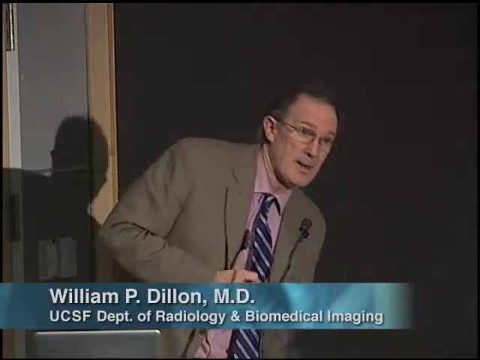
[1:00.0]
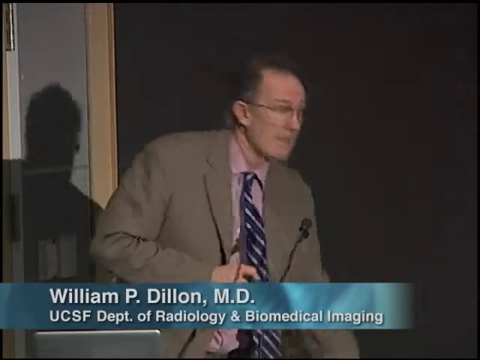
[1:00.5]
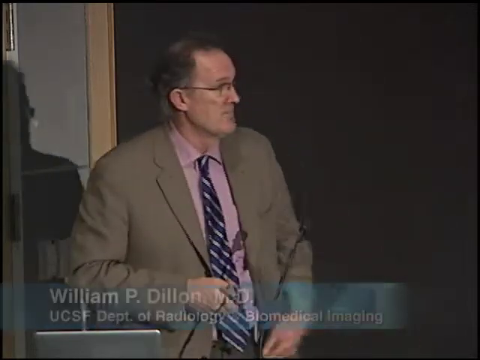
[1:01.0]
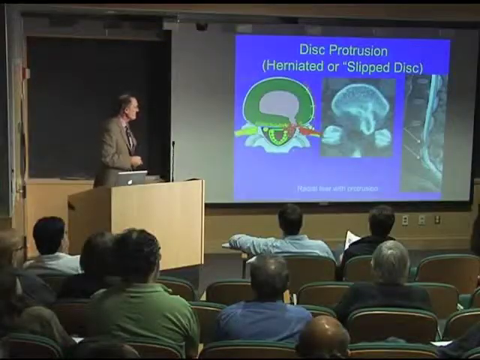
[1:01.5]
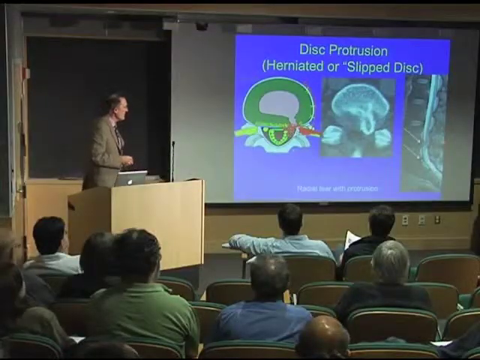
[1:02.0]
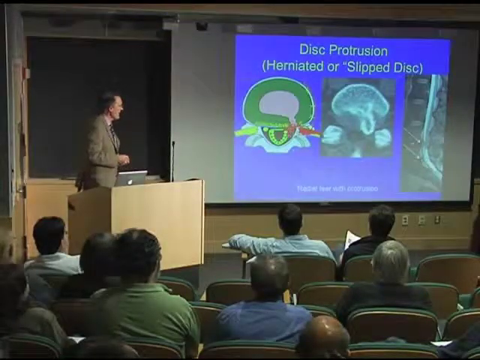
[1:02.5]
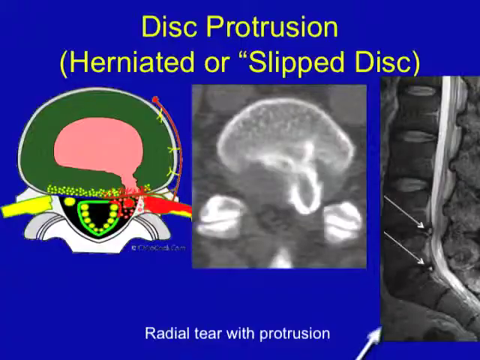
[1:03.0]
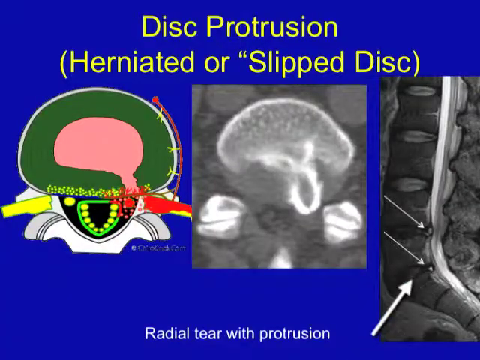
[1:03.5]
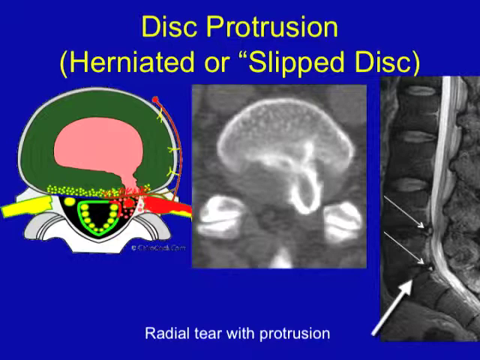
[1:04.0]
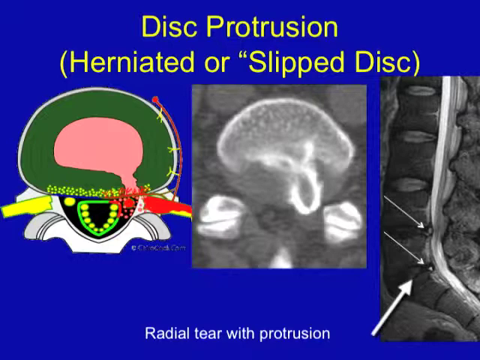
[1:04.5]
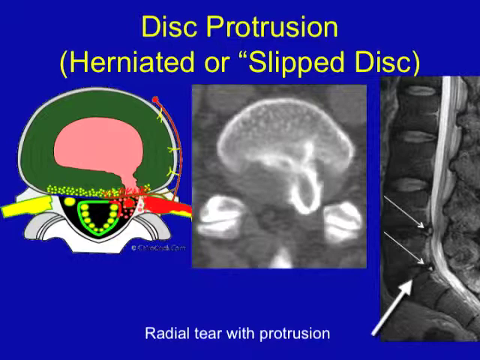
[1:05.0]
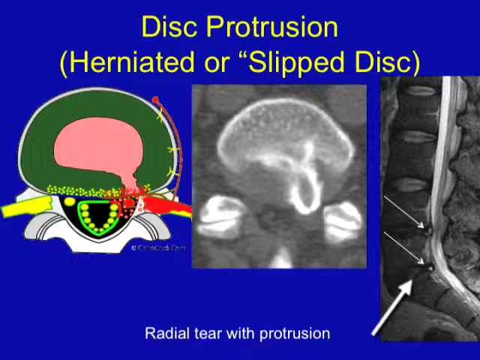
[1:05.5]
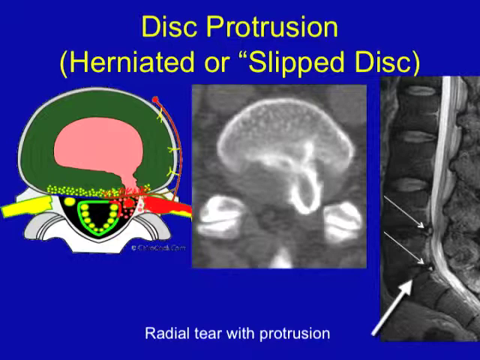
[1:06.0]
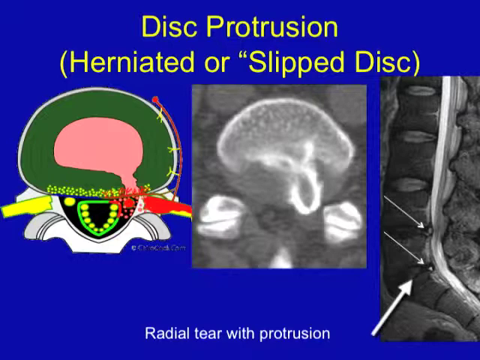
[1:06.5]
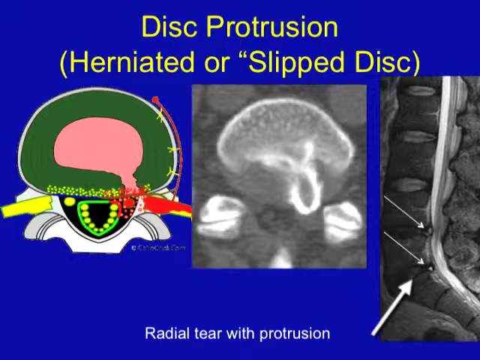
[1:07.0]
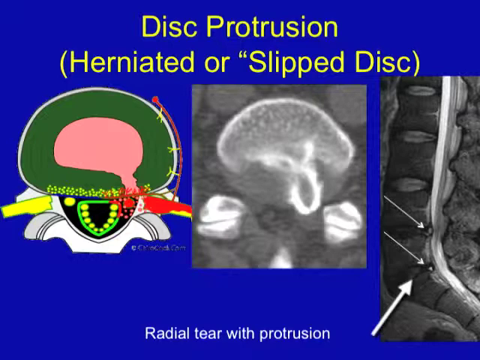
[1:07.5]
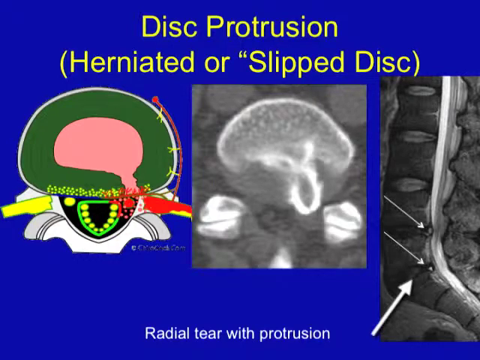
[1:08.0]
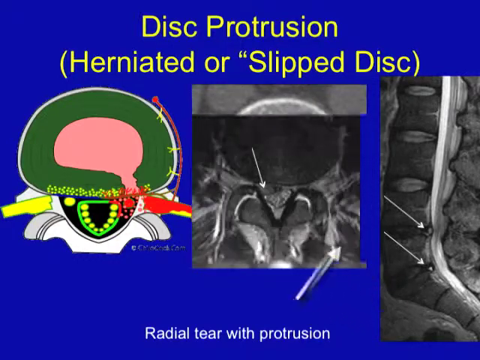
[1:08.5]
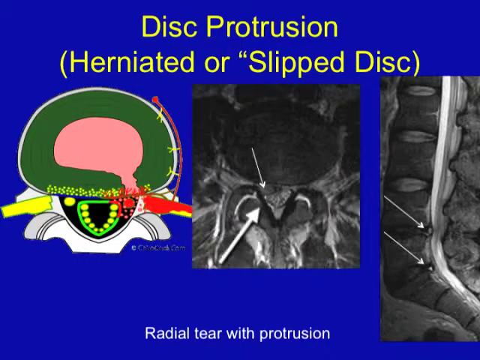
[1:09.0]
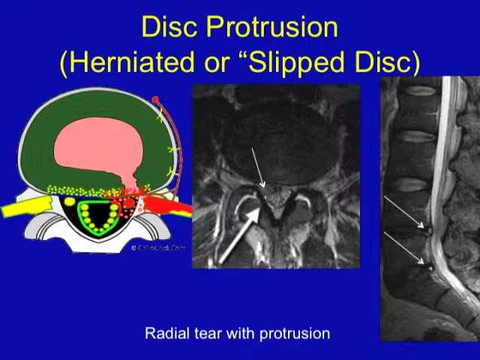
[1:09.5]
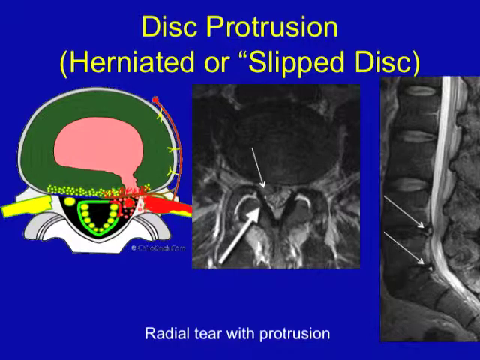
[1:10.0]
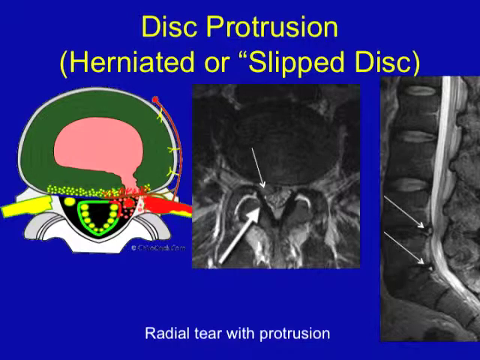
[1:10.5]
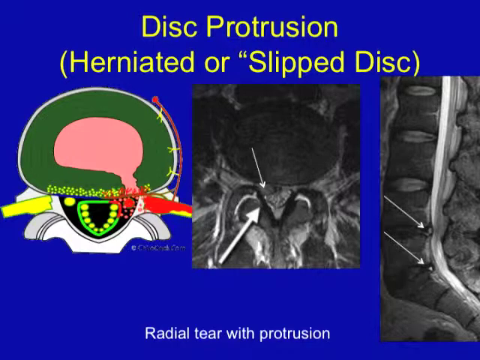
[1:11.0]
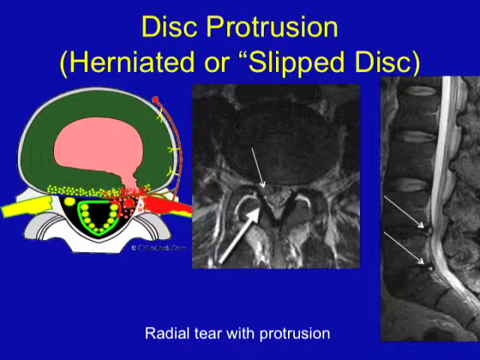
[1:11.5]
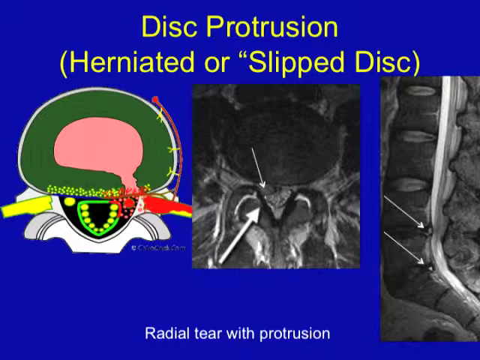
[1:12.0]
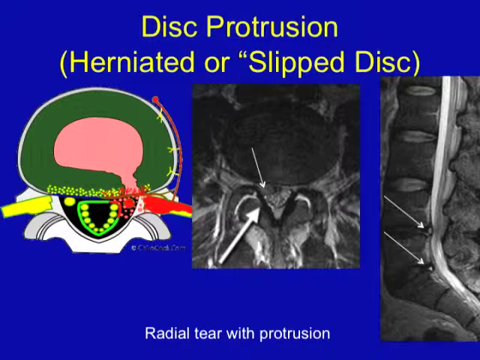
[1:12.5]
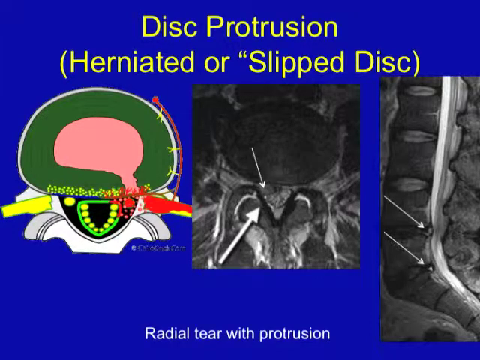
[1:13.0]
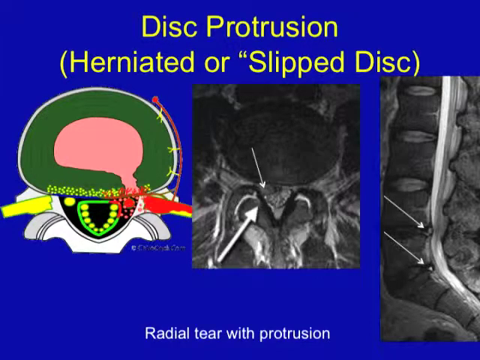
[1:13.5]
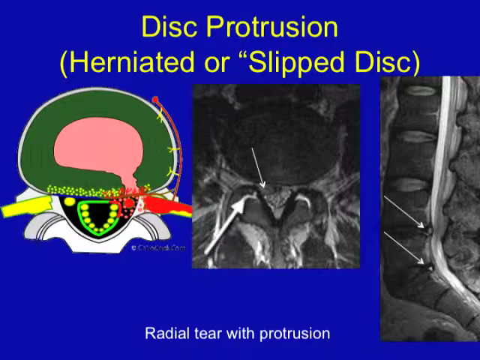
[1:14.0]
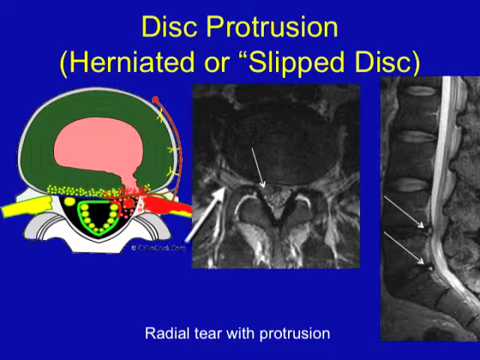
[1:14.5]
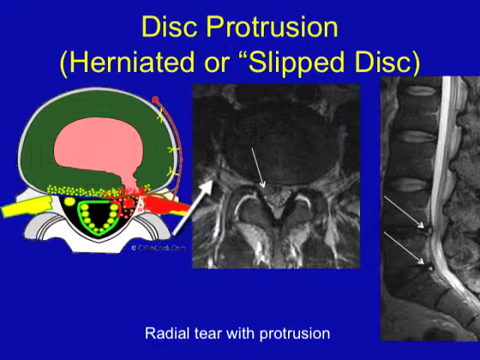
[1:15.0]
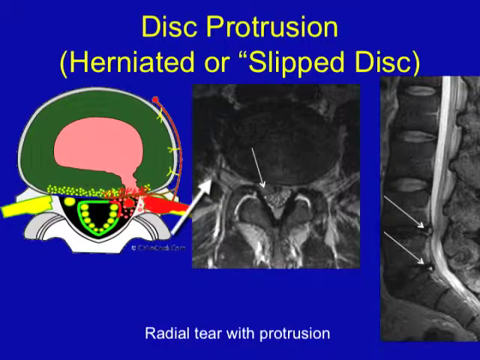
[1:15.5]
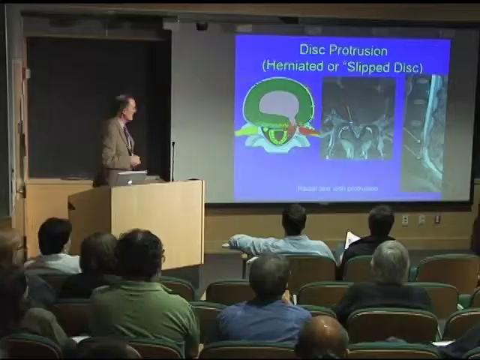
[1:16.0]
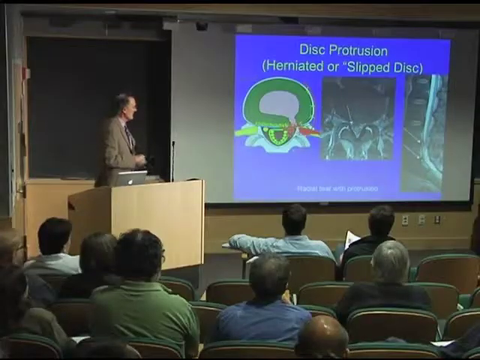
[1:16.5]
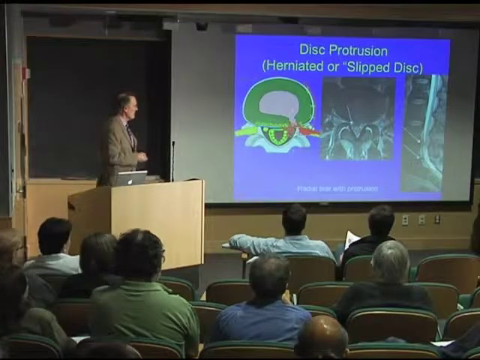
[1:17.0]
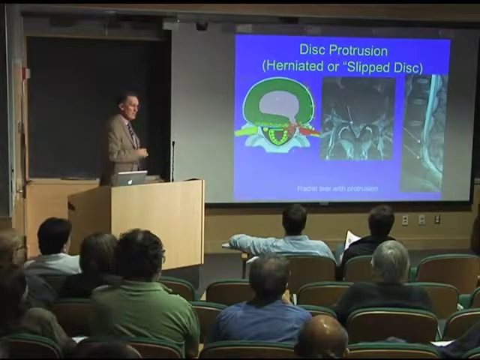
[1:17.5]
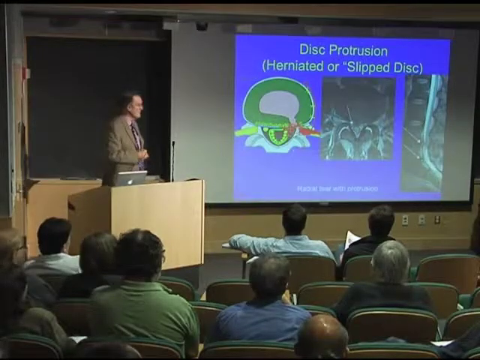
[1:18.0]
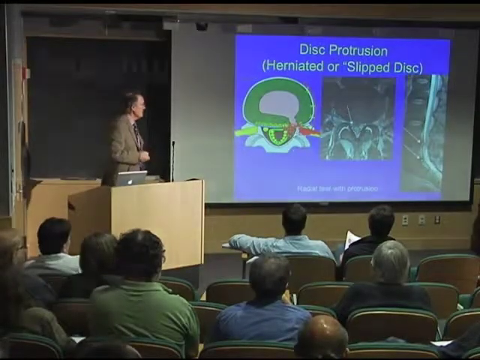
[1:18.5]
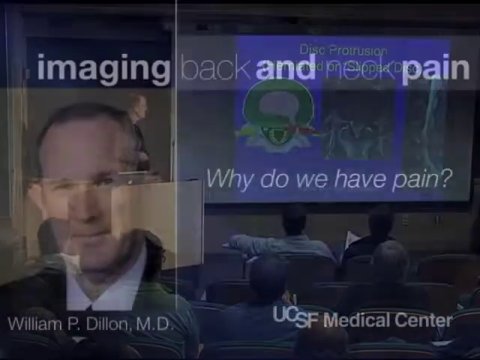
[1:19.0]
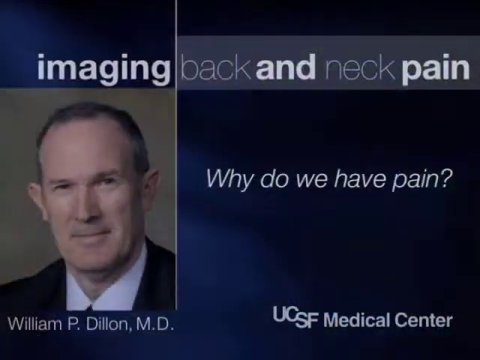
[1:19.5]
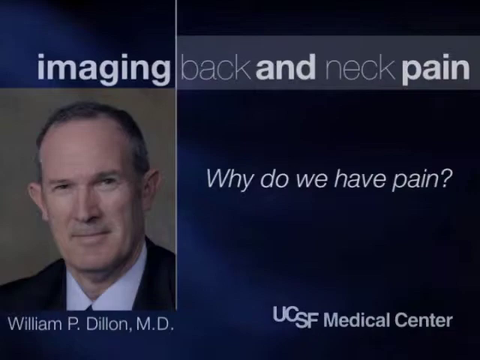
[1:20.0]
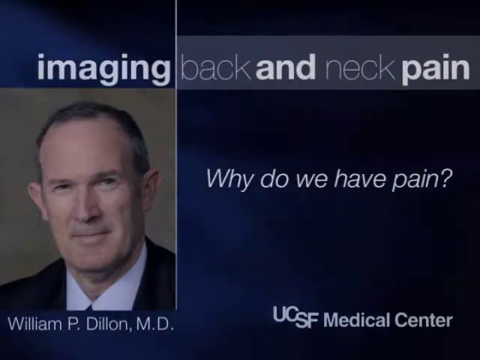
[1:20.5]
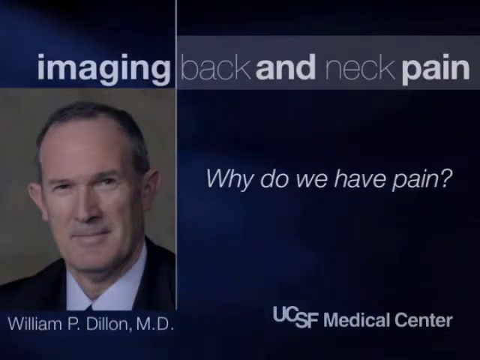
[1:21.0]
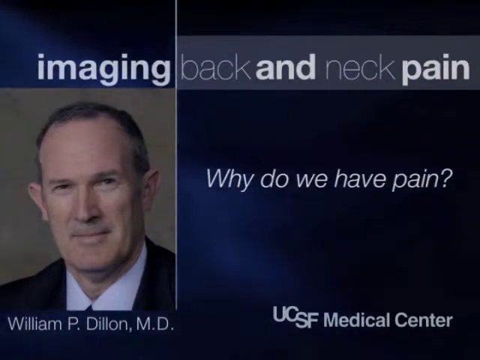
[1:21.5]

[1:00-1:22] A dark image has a black background from the right three-quarters of the way over. In the center of this black area is a gentleman leaning over toward his left. He has darker hair and glasses, his mouth is slightly open, and his ear on his right side is visible. He wears a pinkish shirt, a dark blue tie with light blue stripes and a light brown jacket. His right arm is bent, his index finger is visible, and the jacket sleeves go down. A dark object that looks like a microphone seems to be attached to his left lapel, coming up as if he is speaking into it. Behind him, his shadow falls on a wall, and what looks like a door is behind him, with two gray panels, hinges at the top and in the middle, and tan framing. At the bottom, starting from the left, is a blue band that fades into a lighter blue sparkly image, with the words "William P. Dillon, MD, UCSF Department of Radiology, Biomedical Engineering" on top of it.